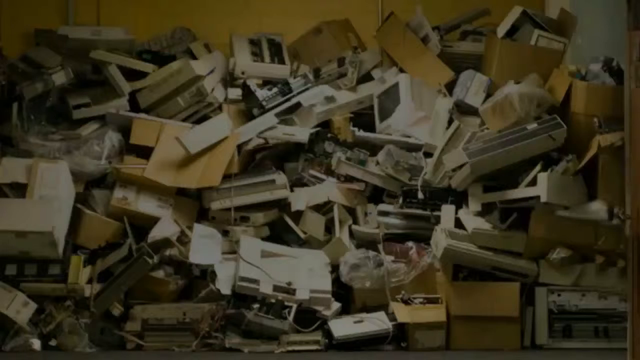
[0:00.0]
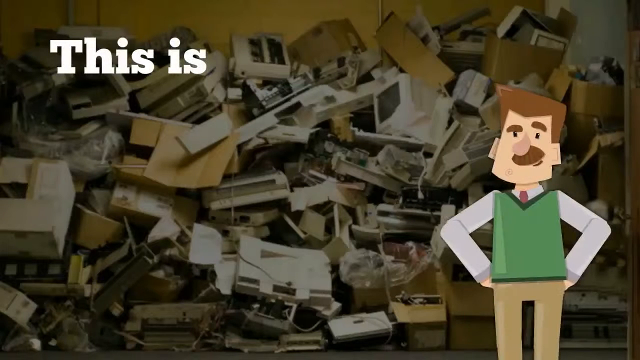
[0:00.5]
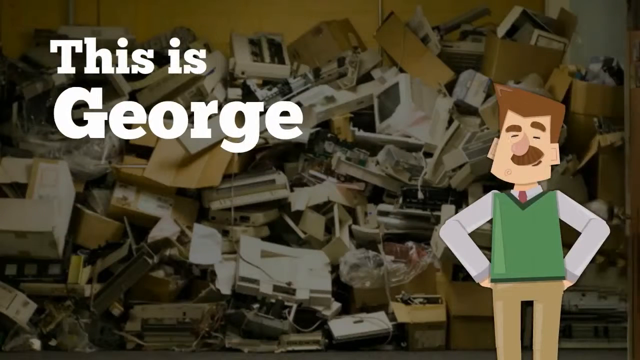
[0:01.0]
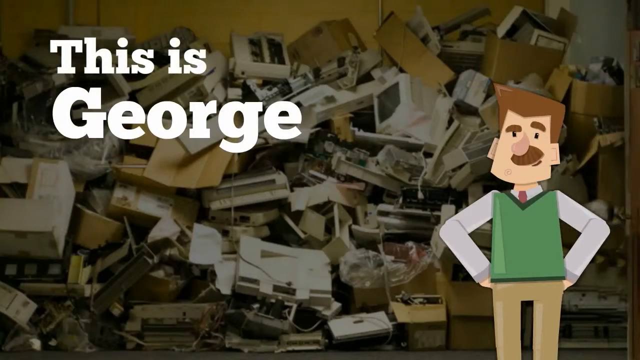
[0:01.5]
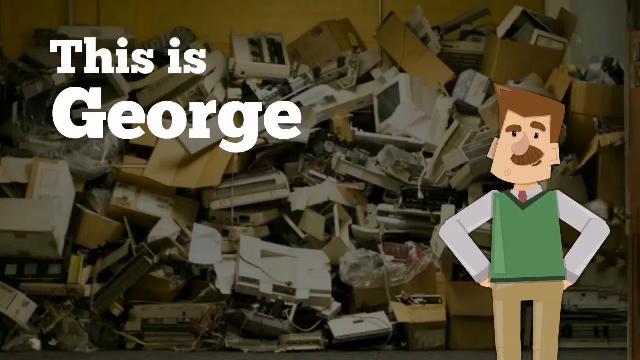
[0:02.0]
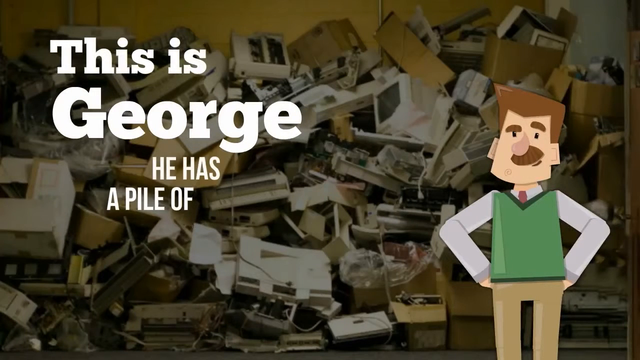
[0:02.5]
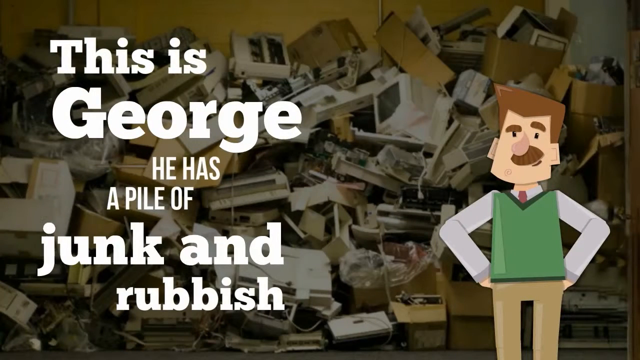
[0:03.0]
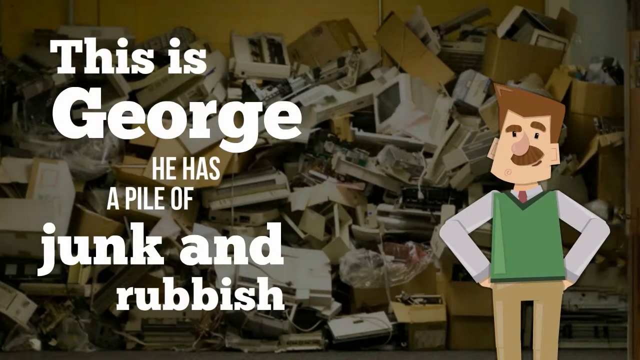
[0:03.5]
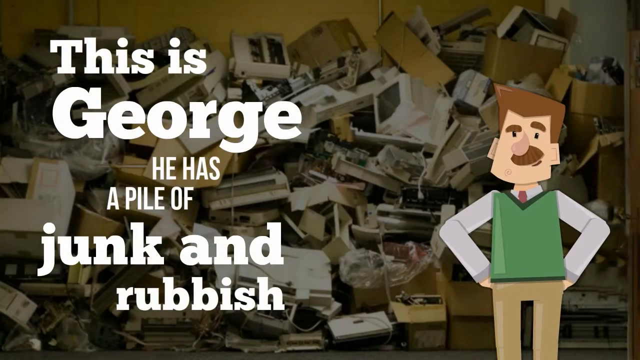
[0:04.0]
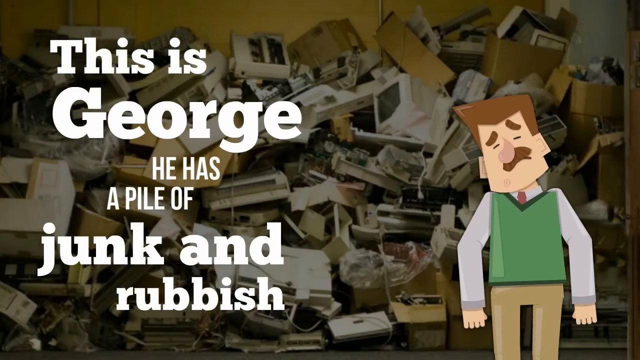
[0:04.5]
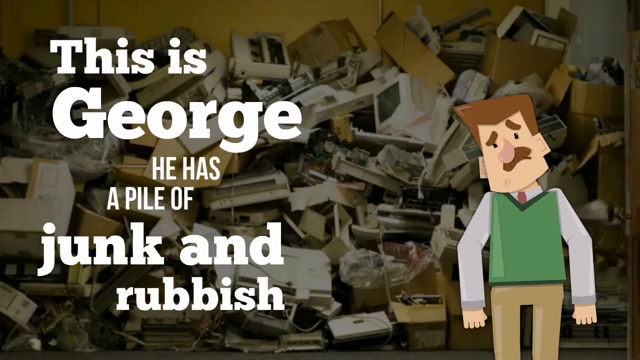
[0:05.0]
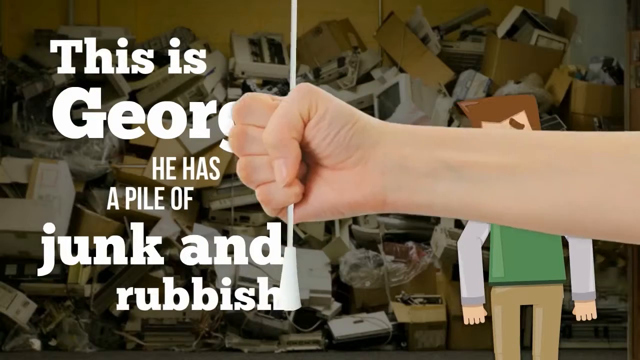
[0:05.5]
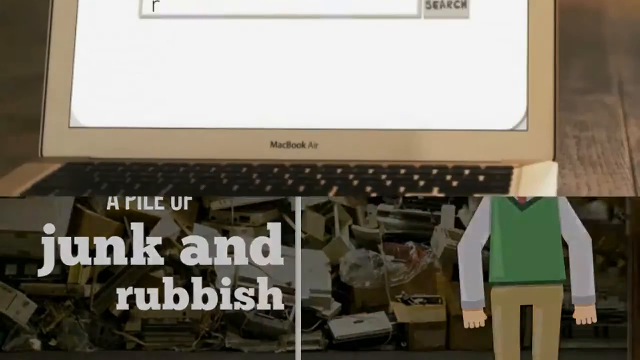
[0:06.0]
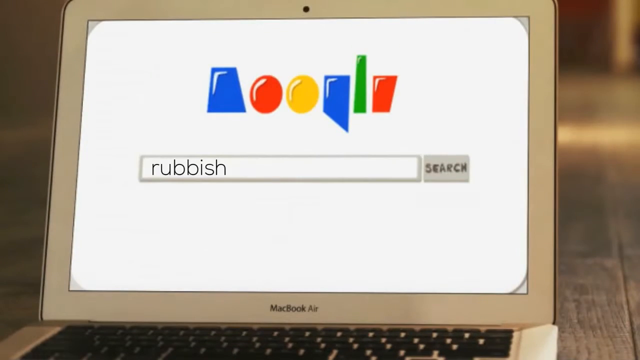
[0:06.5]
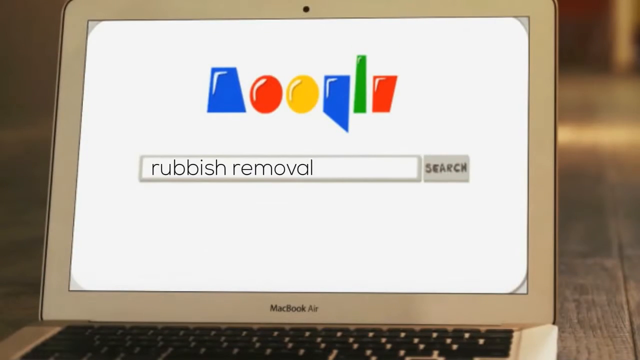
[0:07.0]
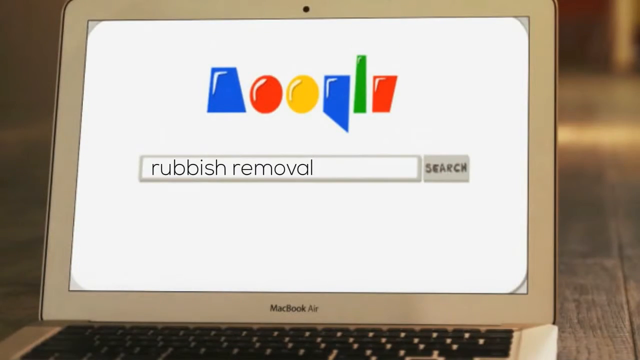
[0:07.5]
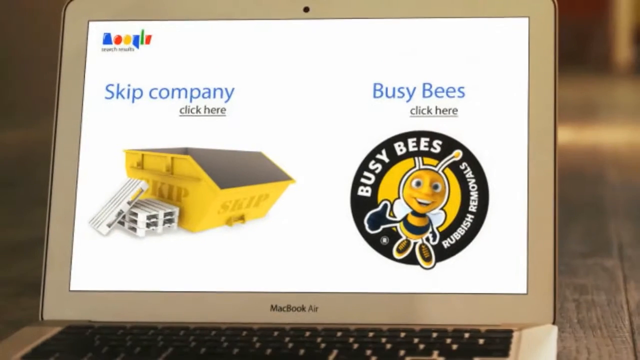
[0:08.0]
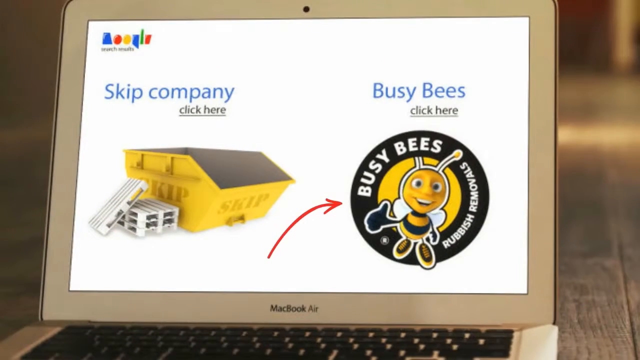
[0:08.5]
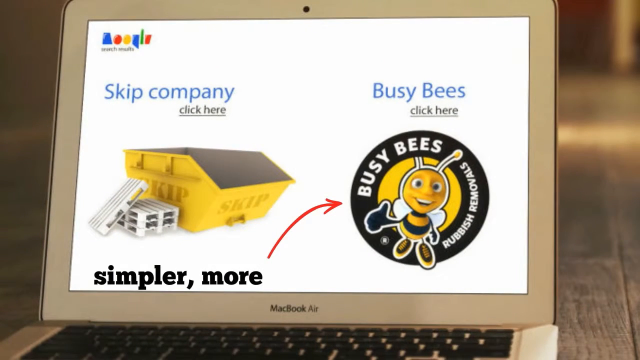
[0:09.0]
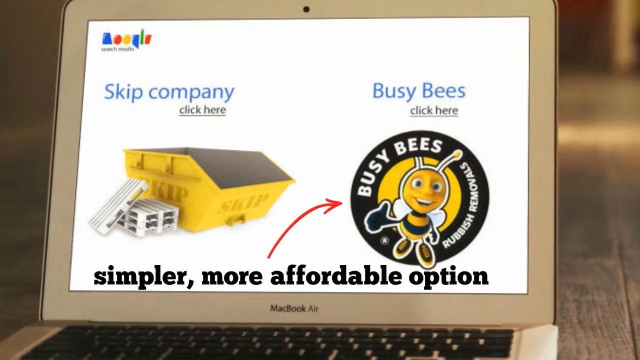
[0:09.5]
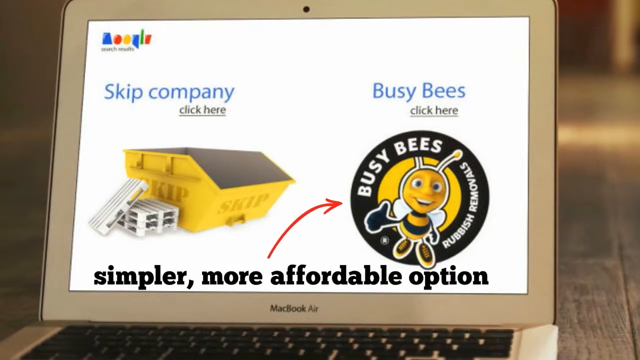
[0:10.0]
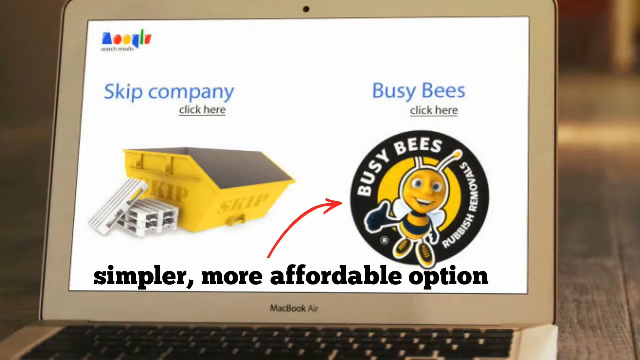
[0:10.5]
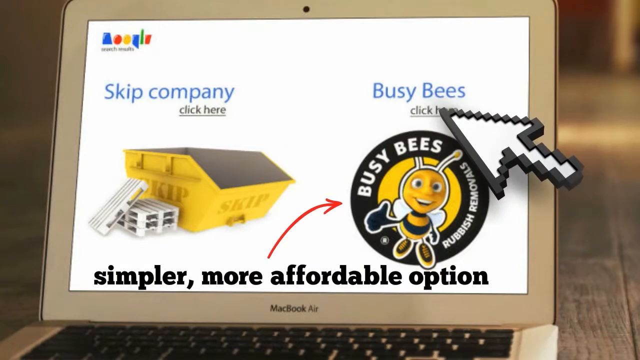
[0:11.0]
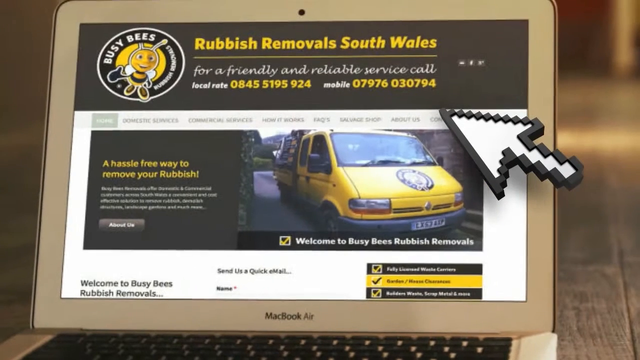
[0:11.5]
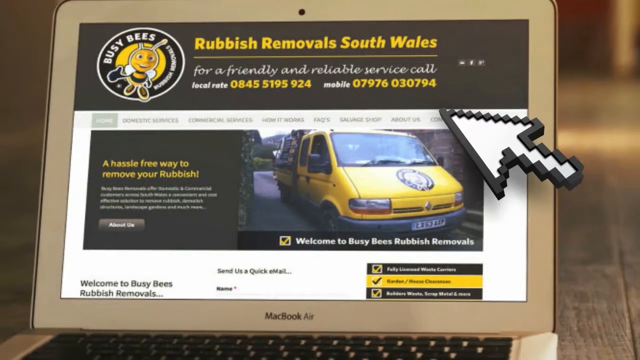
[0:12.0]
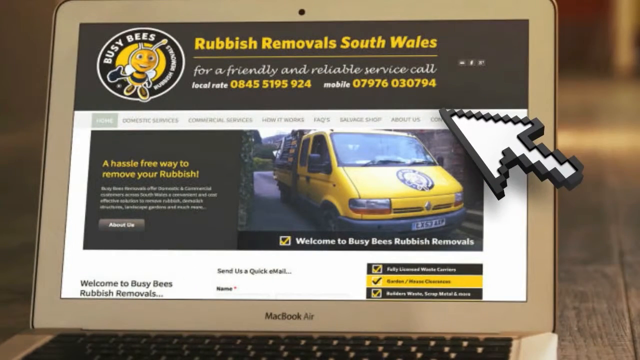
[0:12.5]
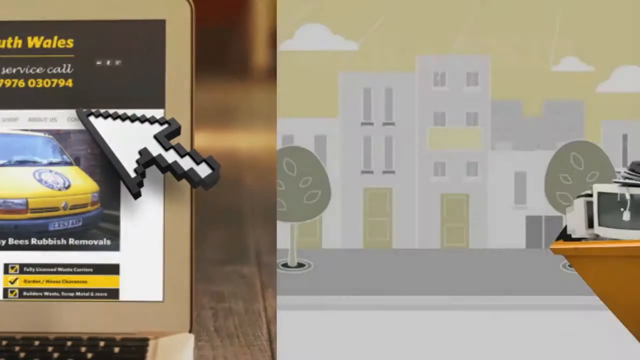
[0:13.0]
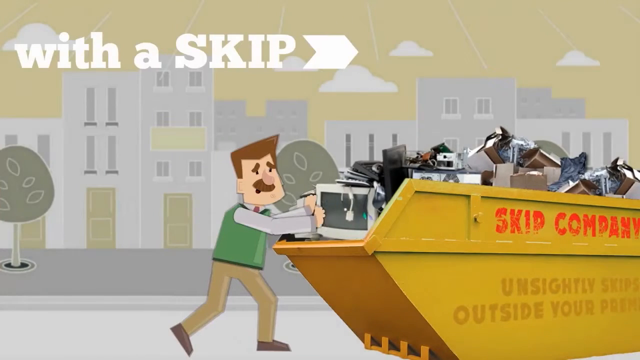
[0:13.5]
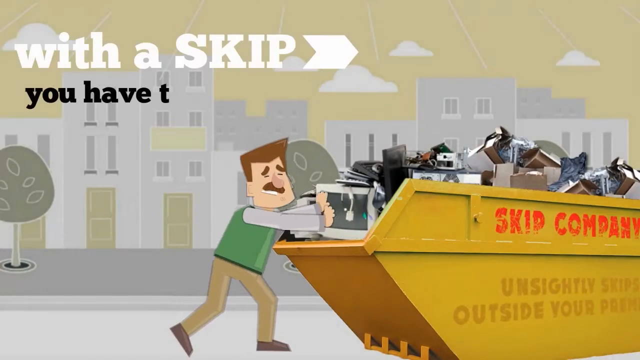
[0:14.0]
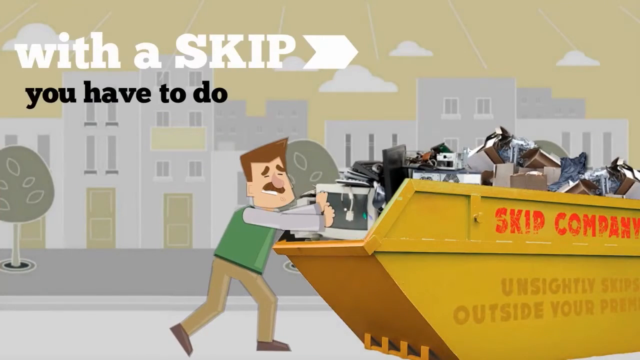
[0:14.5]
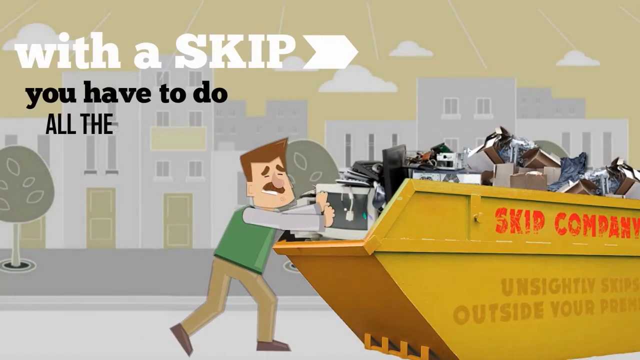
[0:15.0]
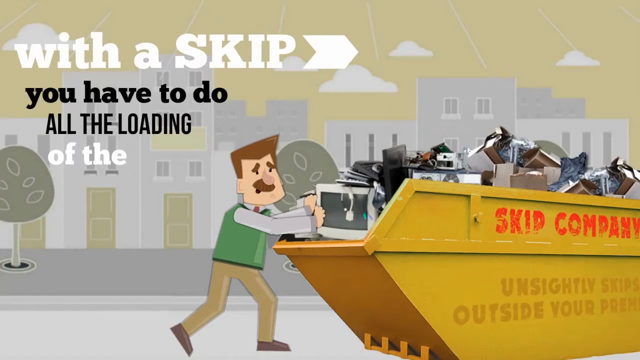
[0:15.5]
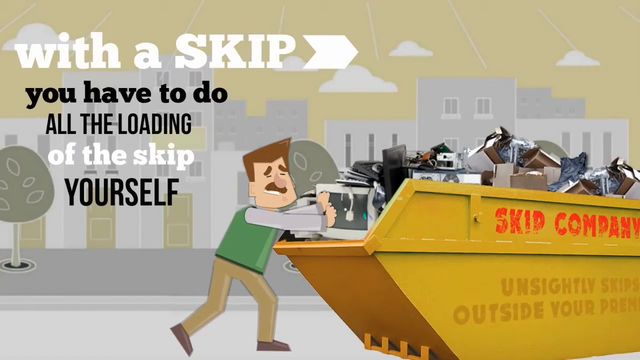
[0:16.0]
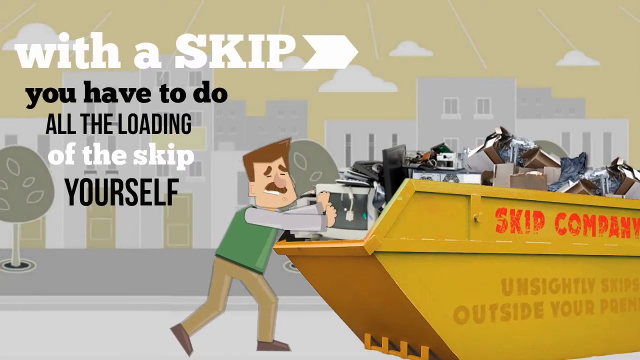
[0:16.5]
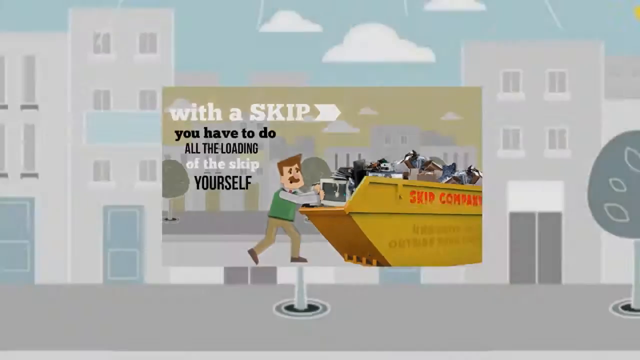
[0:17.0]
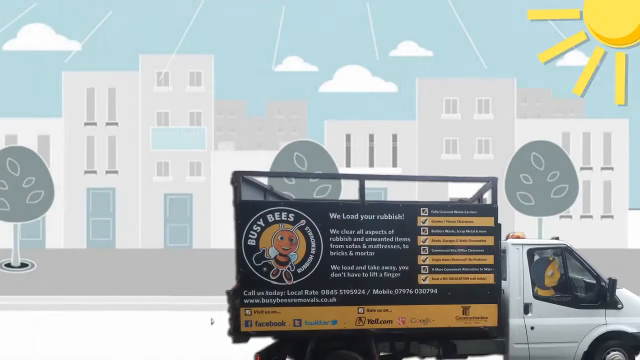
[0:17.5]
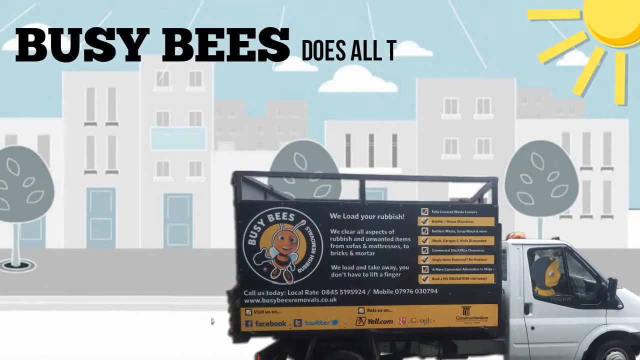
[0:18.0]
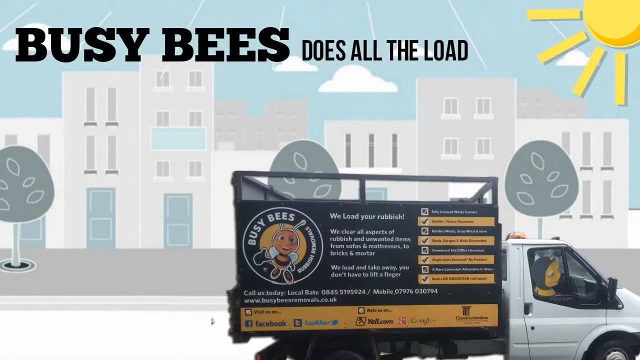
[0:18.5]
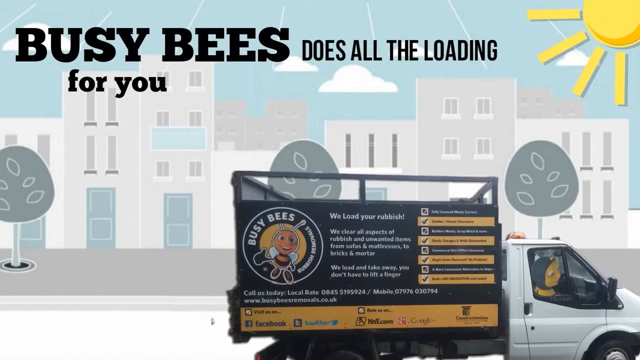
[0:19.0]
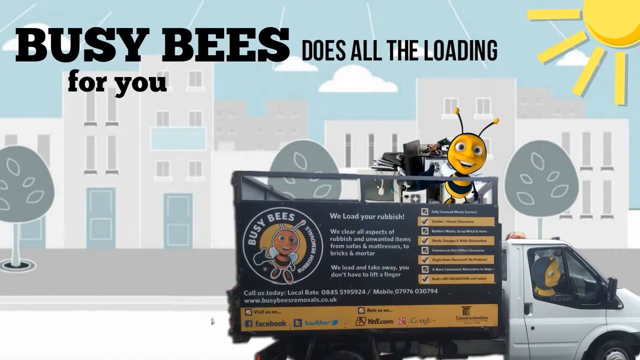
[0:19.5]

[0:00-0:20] The background is made up of a heap of electronic and cardboard waste. On the left, captions read "this is George. He has a pile of junk and rubbish." On the right is a cartoon man wearing a green vest and light brown pants. He has a mustache and brown hair, his arms are bent with his hands on his waist, and he looks toward the viewer. The man then looks sad: his arms are down at his sides, he frowns, and his head is tilted to the left. An arm and hand come in from the right side and pull down on a cord. A cartoon image of the Google homepage appears with "rubbish removal" in the search box. On the right side a company called "Busy Bees rubbish removals" appears with a red arrow pointing to it, and captions at the bottom read "simpler, more affordable option." The screen changes to the Busy Bees website, with a pixelated arrow on the right pointing toward it. In a new scene, the cartoon man pushes electronic waste and junk inside a yellow metal container while captions on the left read "with a skip, you have to do all the loading of the skip yourself." The scene changes again and captions at the top read "Busy Bee does all the loading for you," contrasting the service with a skip company.